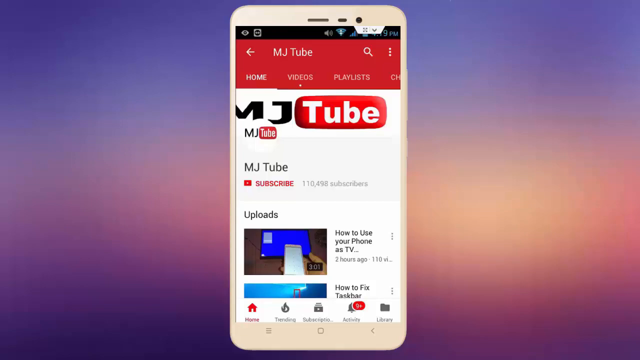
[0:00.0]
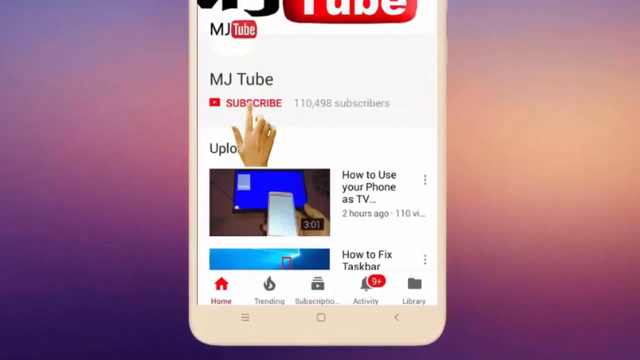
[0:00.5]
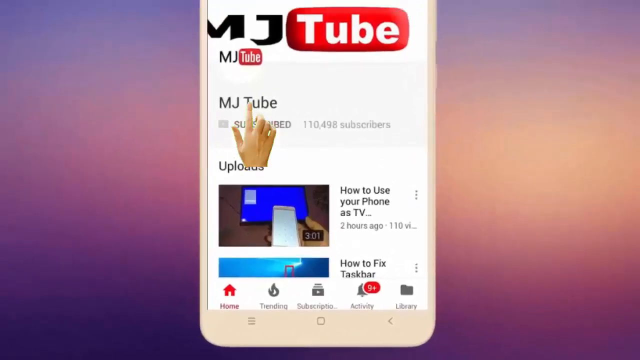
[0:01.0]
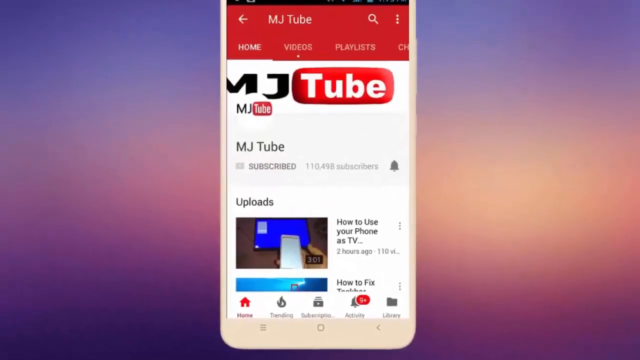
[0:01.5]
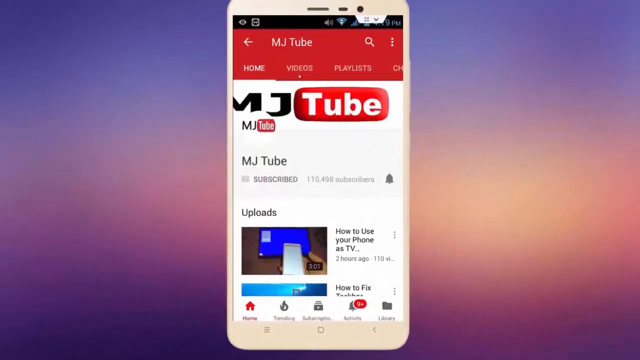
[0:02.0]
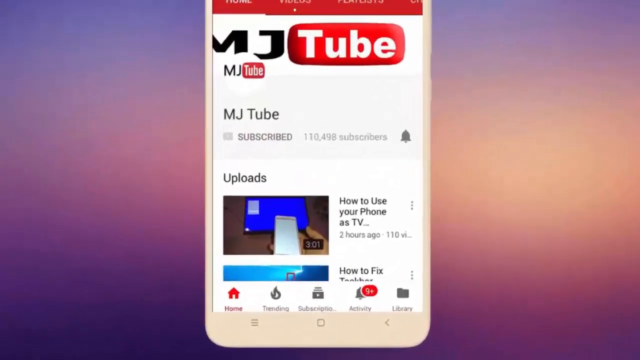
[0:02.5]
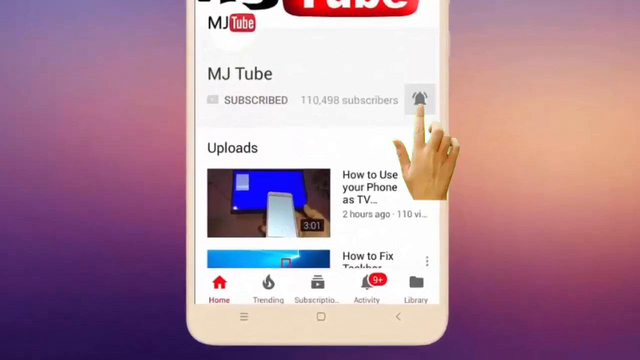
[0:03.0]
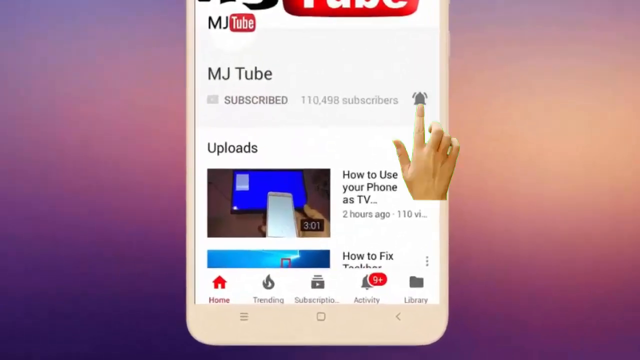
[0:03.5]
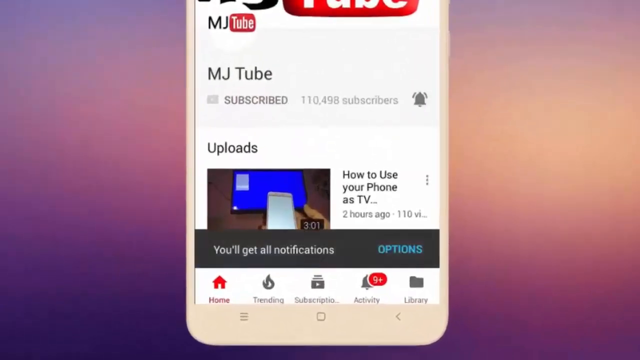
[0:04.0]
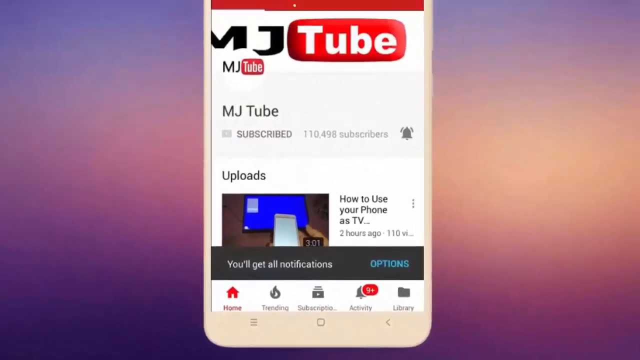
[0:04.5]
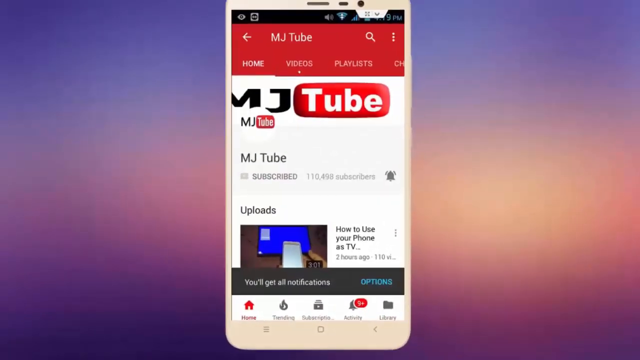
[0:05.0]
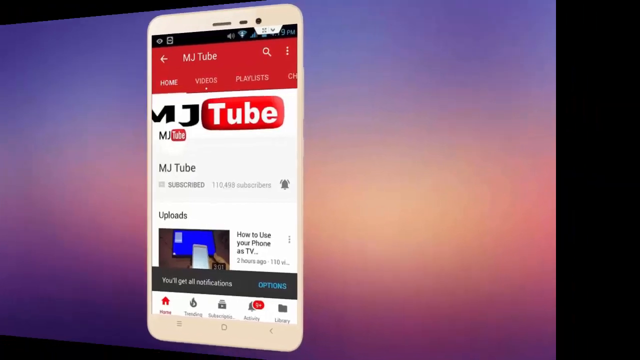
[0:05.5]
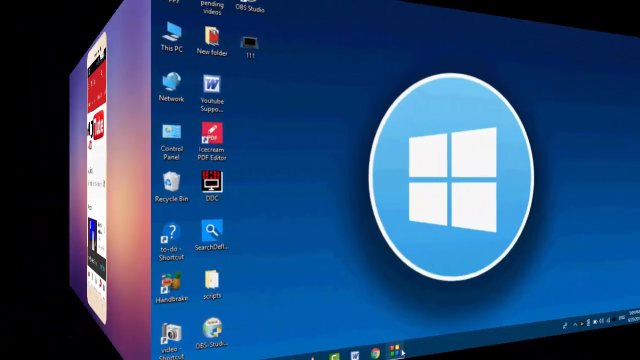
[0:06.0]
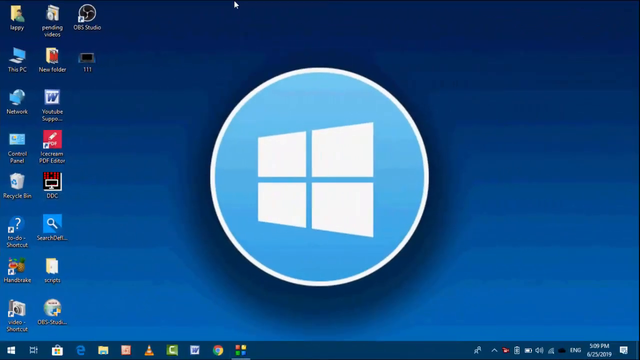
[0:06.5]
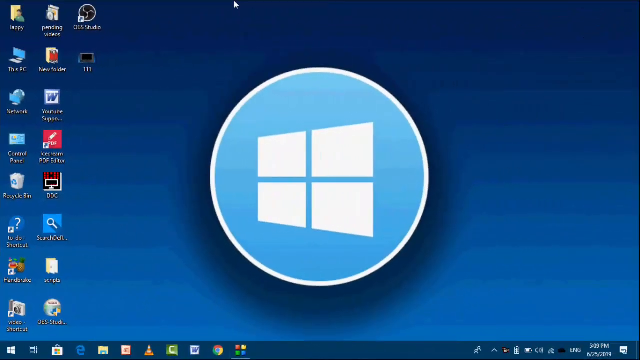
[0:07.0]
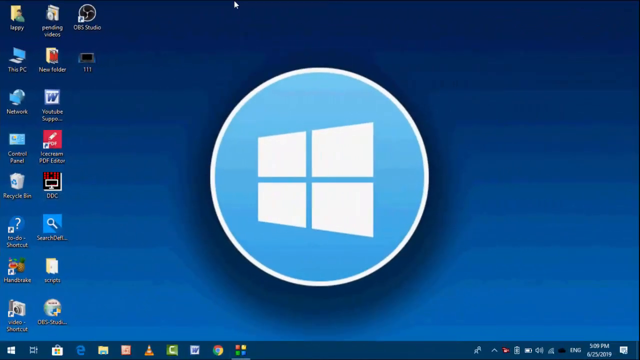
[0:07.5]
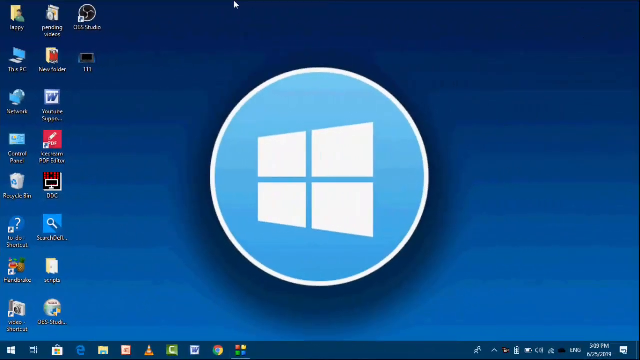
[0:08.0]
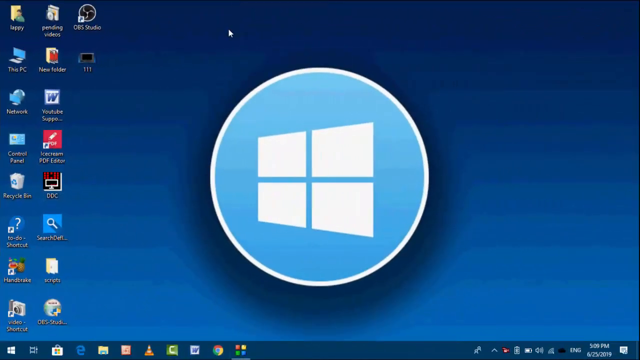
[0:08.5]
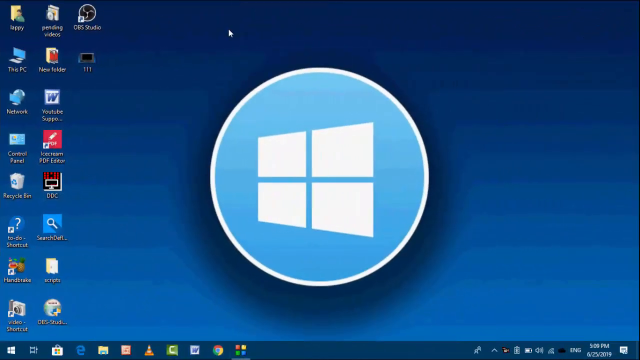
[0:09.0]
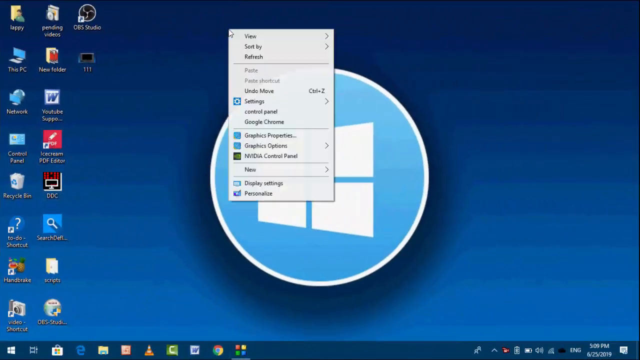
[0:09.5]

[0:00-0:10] The video begins with a screenshot of MJtube, a YouTube channel, viewed from an Android device. It says "MJtube" and shows the subscribe button and the uploads section. The view zooms in on the area where it says subscribe, and it shows "subscribed". The view then changes to a Windows computer. In the center of the screen is a circle with the Windows symbol on it. Applications are on the screen, including Recycle Bin, Network, Control Panel, This PC, New Folder and Scripts, on a blue background.